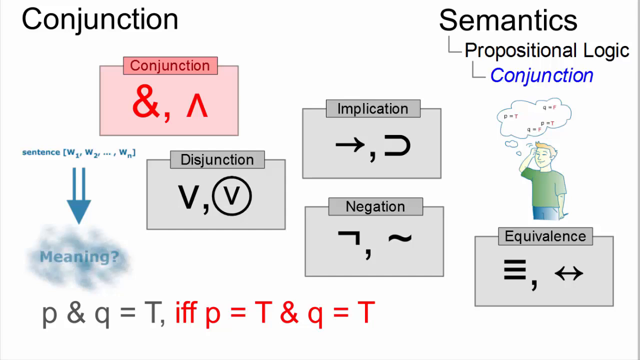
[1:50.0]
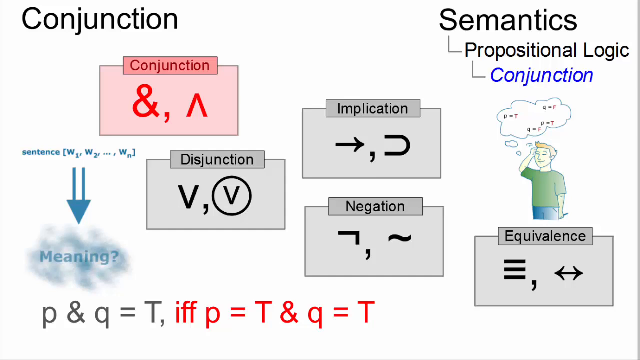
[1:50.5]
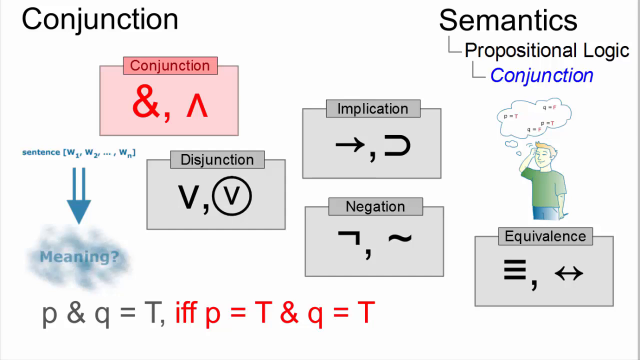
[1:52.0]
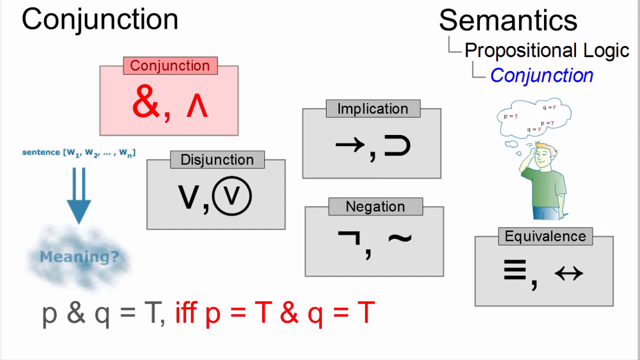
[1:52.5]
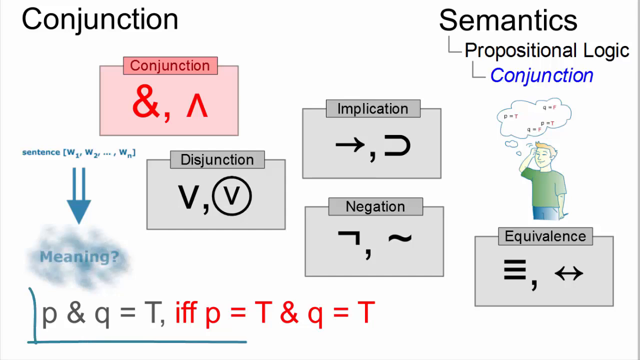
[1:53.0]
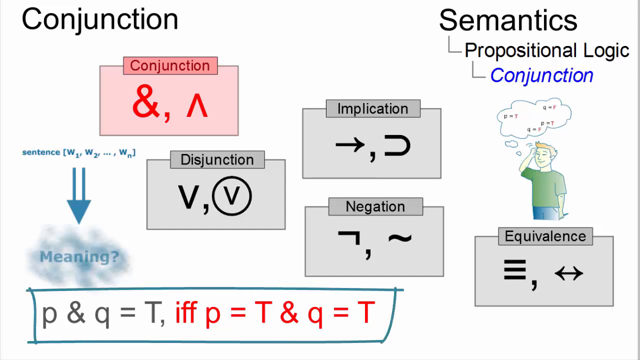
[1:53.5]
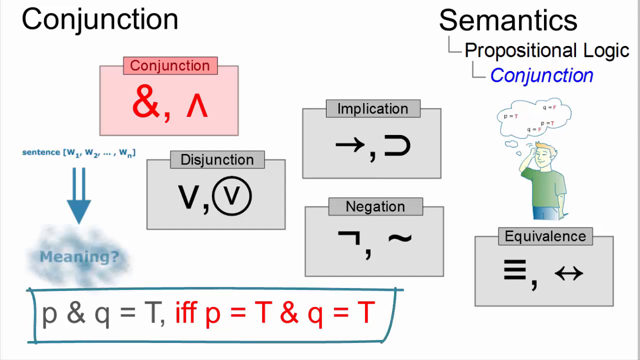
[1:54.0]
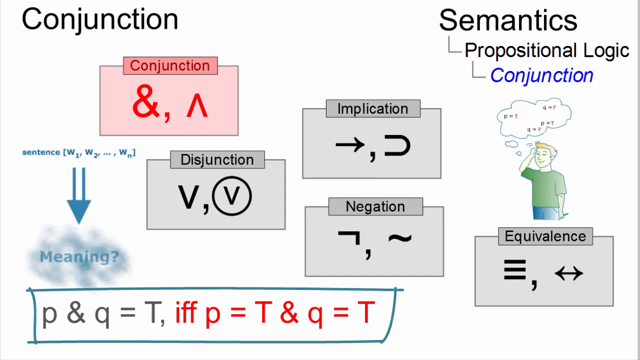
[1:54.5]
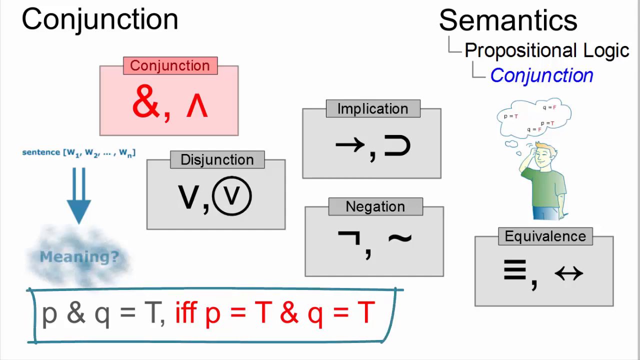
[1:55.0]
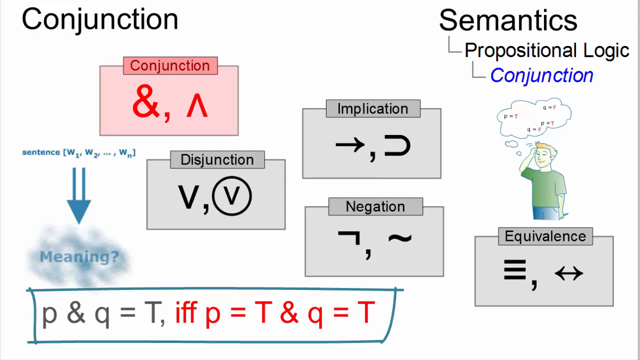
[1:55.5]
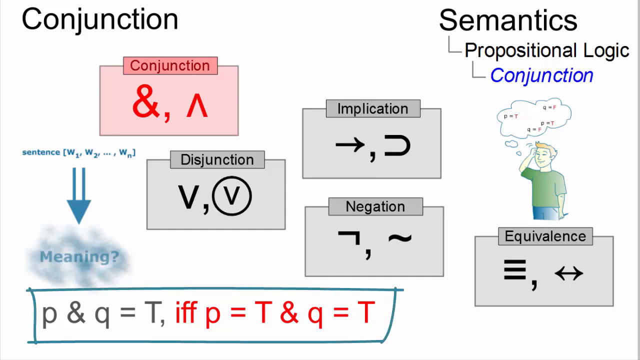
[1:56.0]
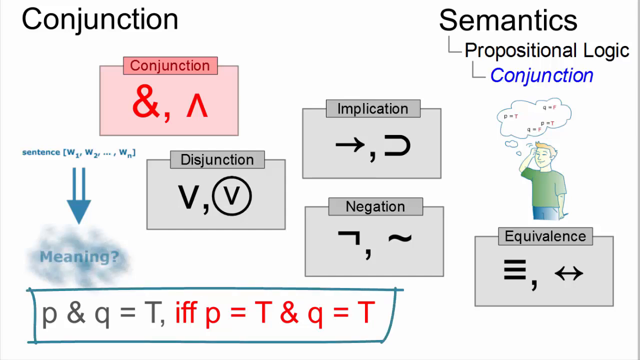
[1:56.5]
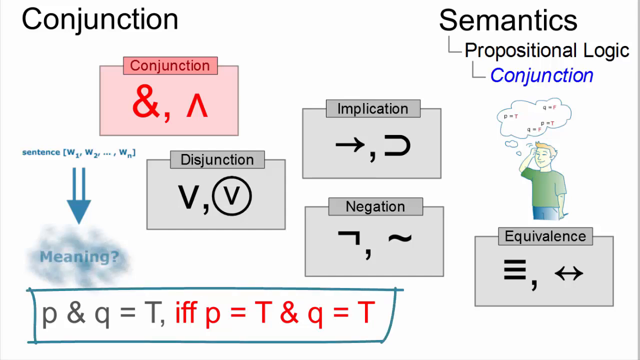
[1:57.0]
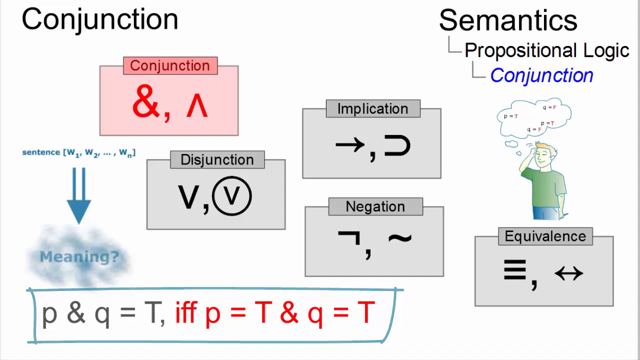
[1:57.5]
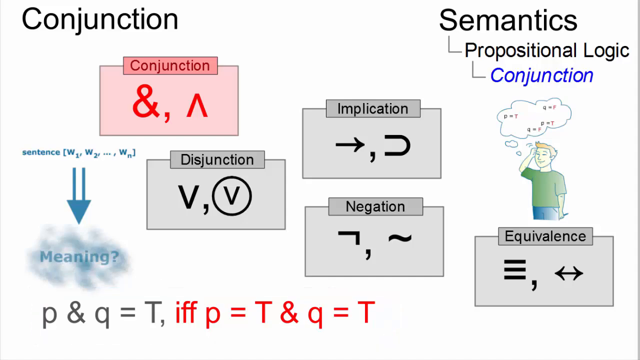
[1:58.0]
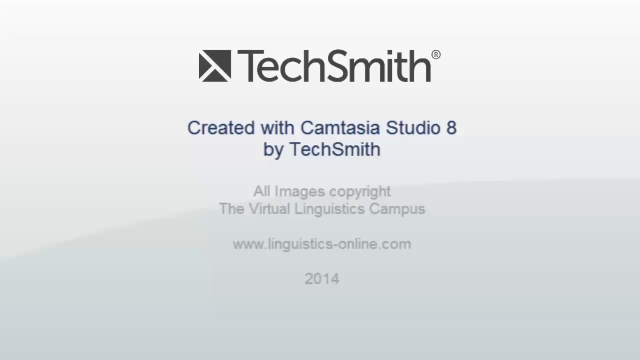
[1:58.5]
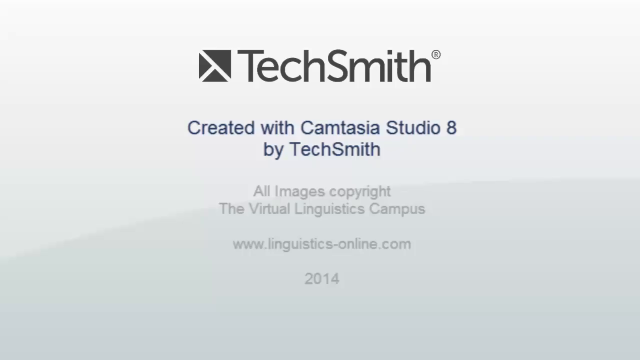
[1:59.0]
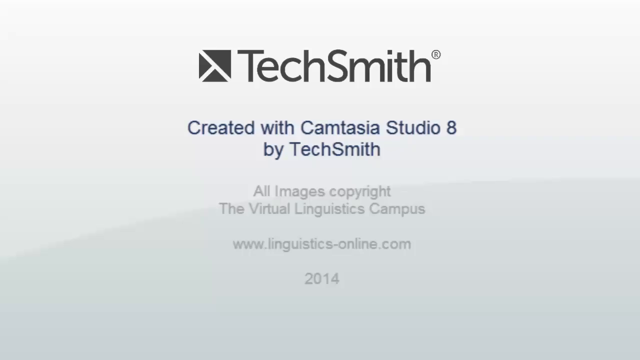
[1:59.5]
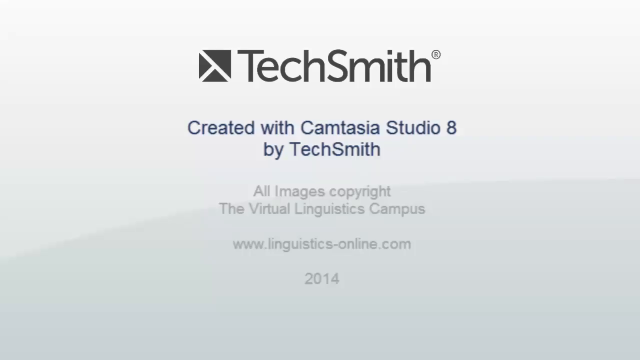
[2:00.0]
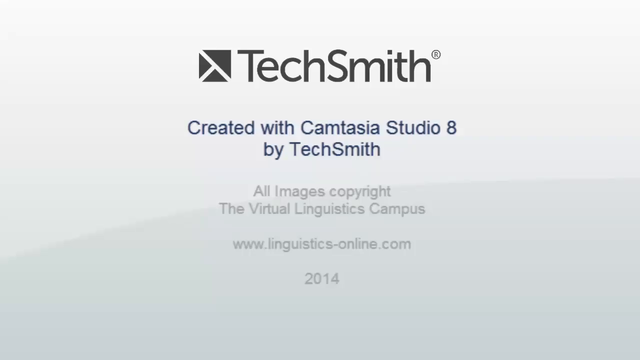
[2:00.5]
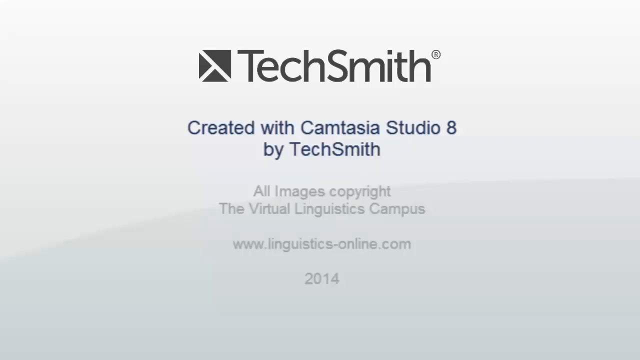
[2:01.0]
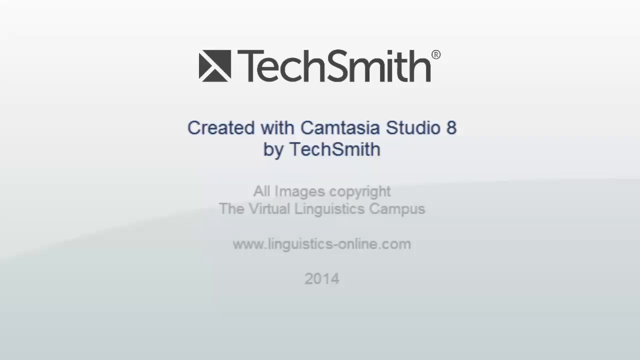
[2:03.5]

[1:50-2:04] The implication box shows a line going straight across to the right and a sideways U with its opening facing left. The negation box below has a line with a small line going down, a comma, and a swirly sign that looks to be a minus. Equivalence is in a gray box with three lines, a comma, and one line with a triangle on each side. Above is the cartoon character holding their head up. Credits read "brought by TechSmith, created by Cam Nastasia, Studio 8 by TechSmith. All images are copyrighted. The Virtual Linguistics Campus, www.linguisticsonline.com, 2014."